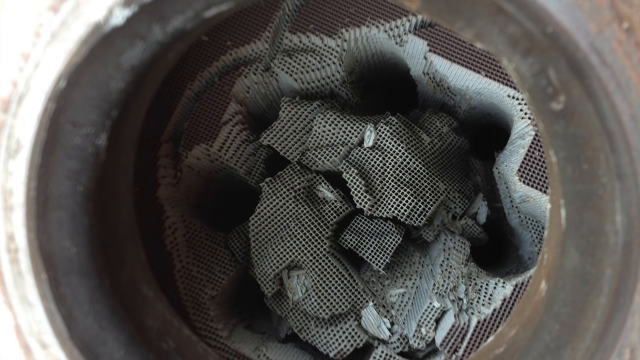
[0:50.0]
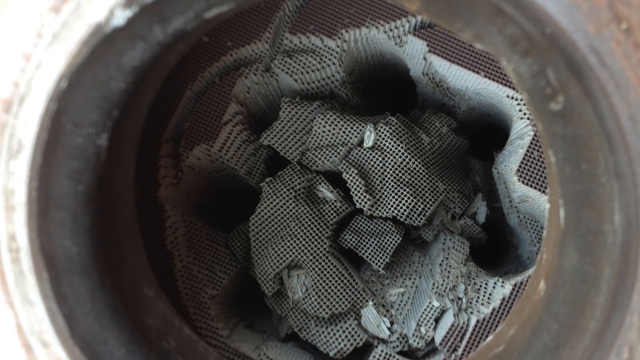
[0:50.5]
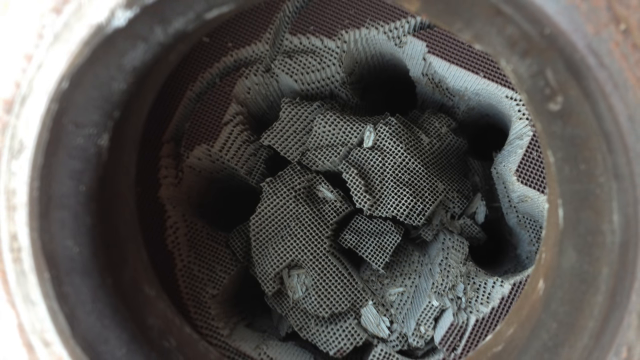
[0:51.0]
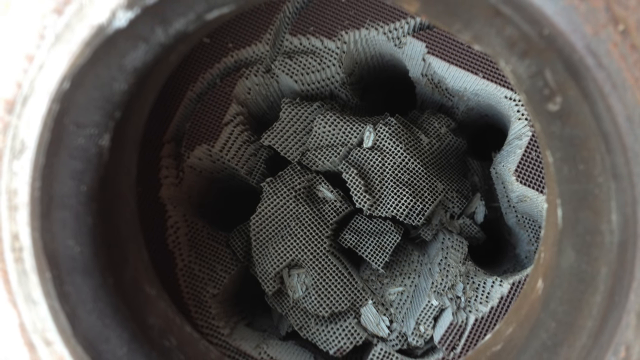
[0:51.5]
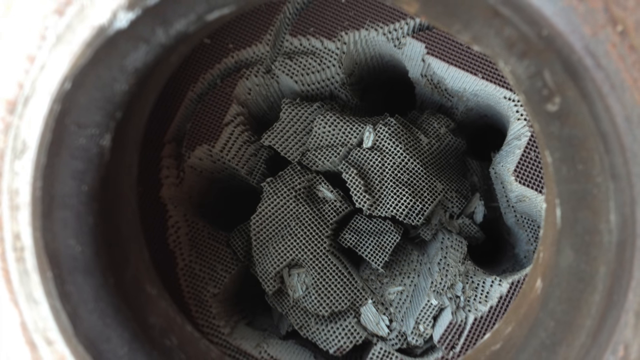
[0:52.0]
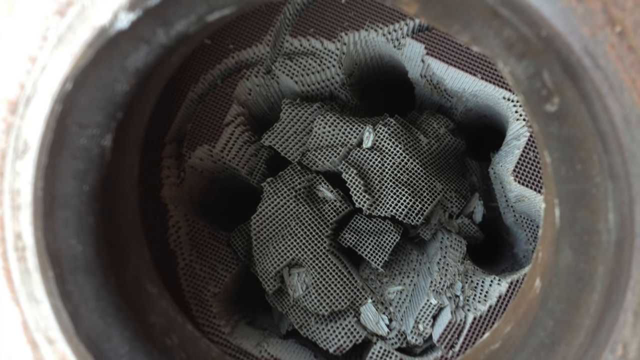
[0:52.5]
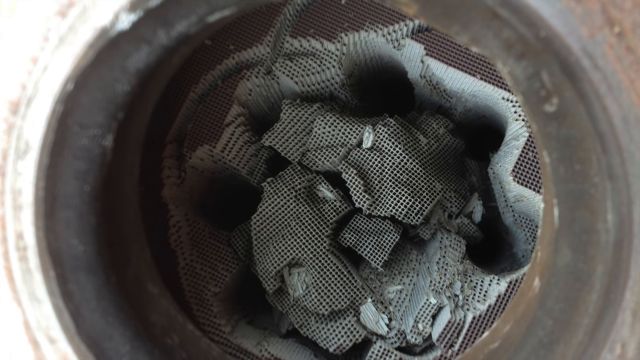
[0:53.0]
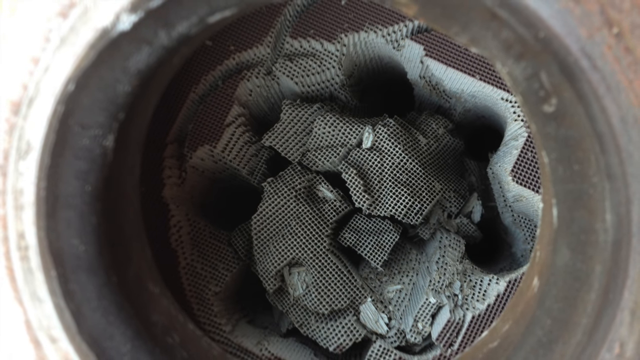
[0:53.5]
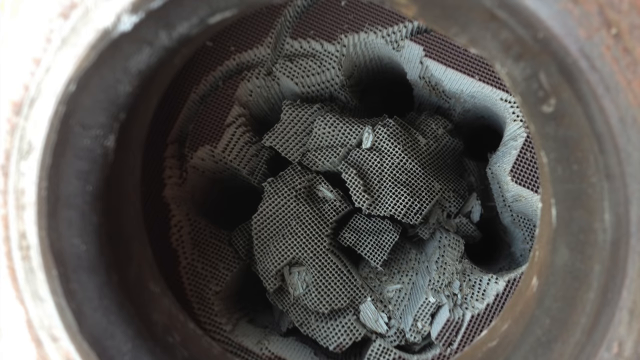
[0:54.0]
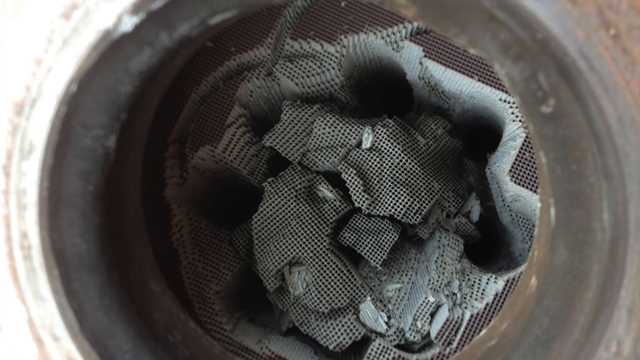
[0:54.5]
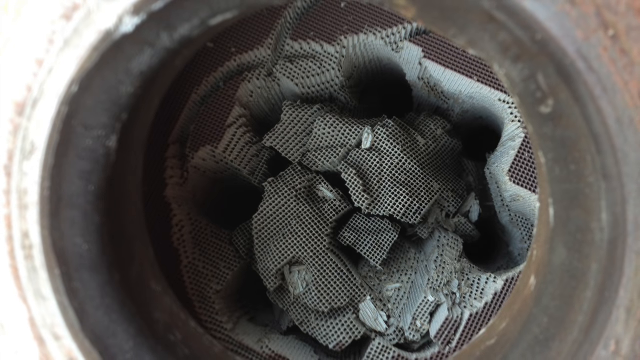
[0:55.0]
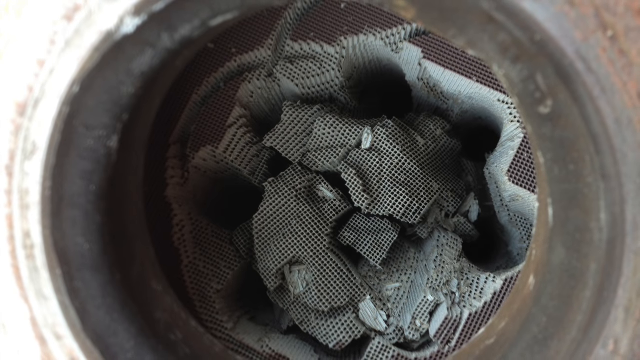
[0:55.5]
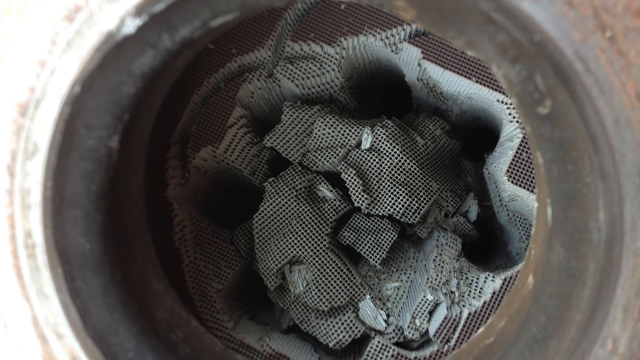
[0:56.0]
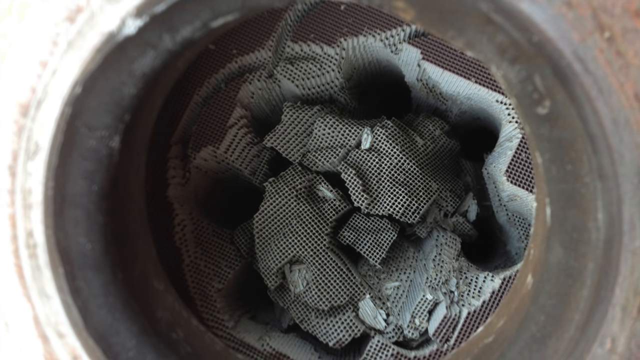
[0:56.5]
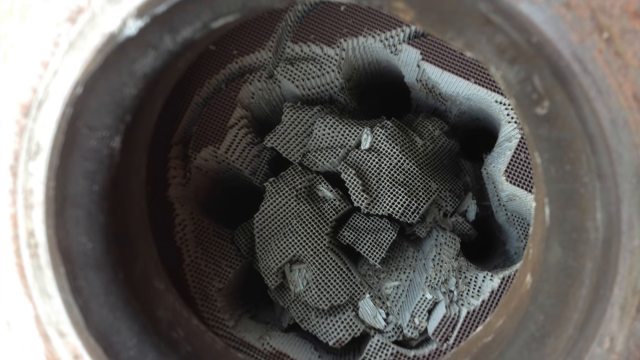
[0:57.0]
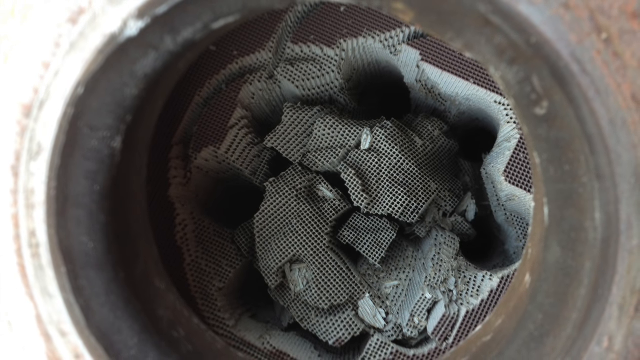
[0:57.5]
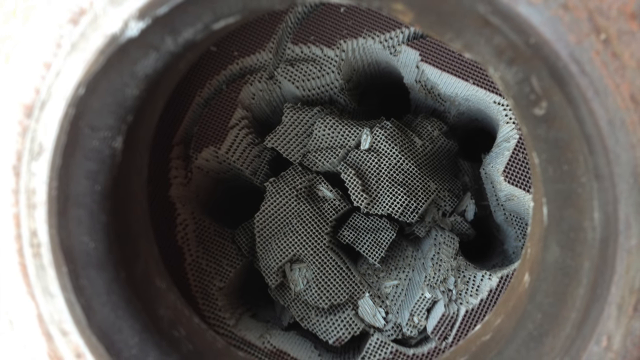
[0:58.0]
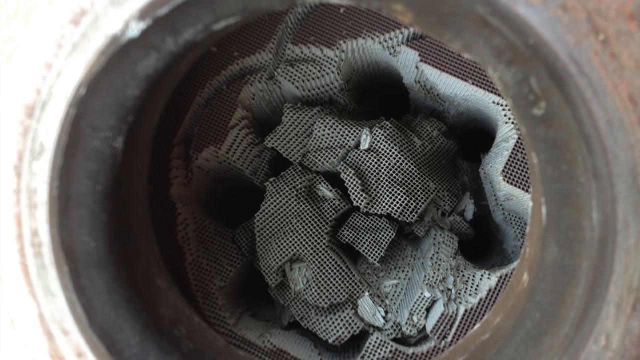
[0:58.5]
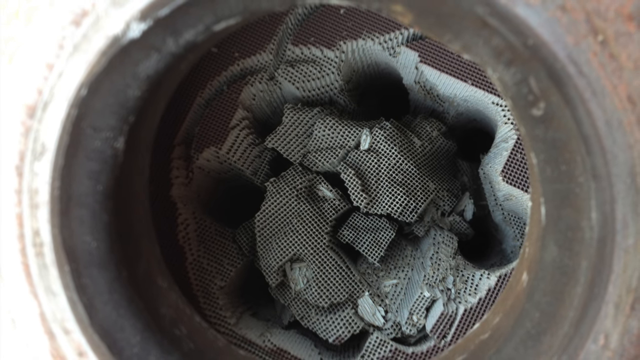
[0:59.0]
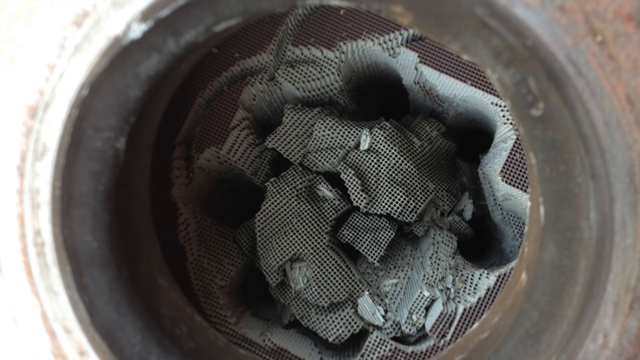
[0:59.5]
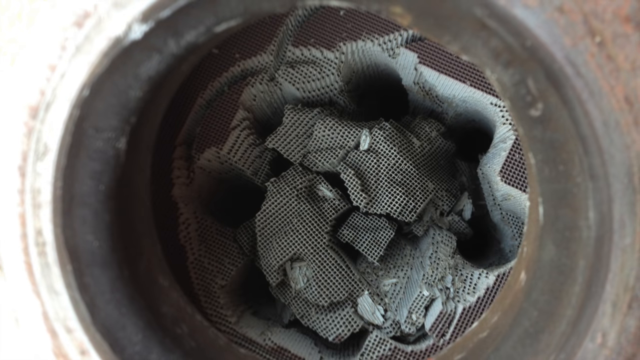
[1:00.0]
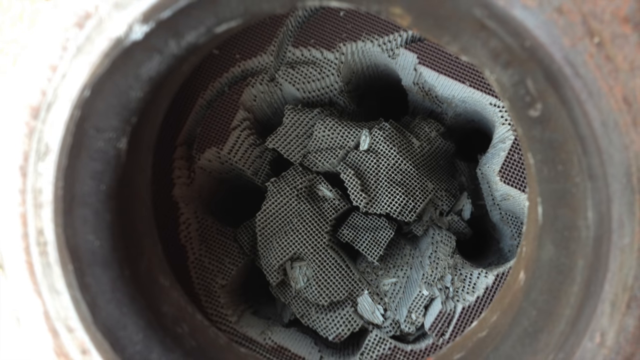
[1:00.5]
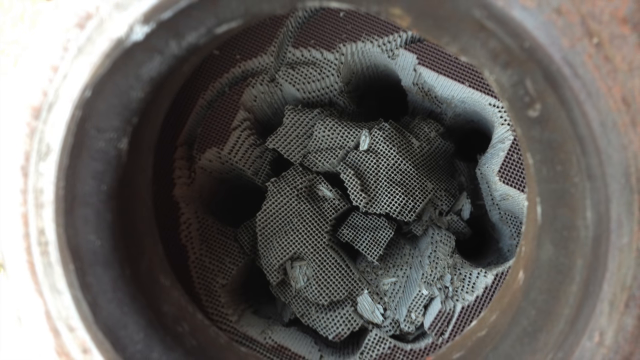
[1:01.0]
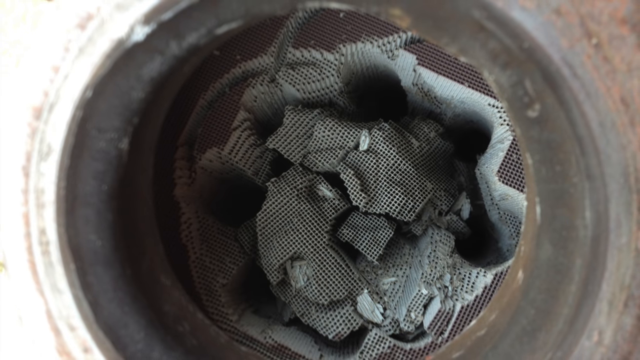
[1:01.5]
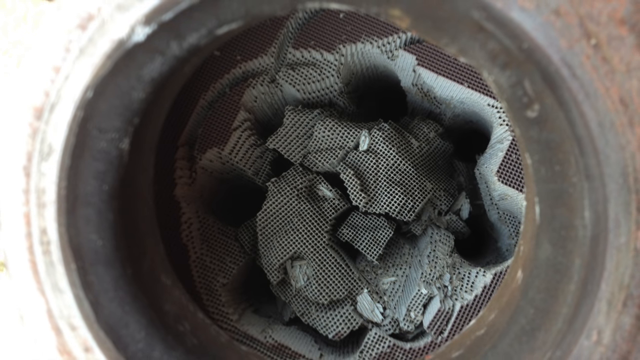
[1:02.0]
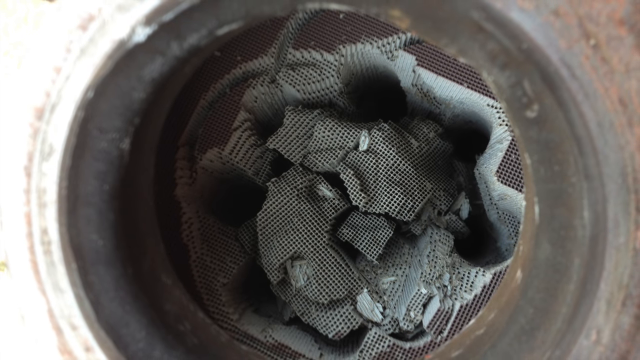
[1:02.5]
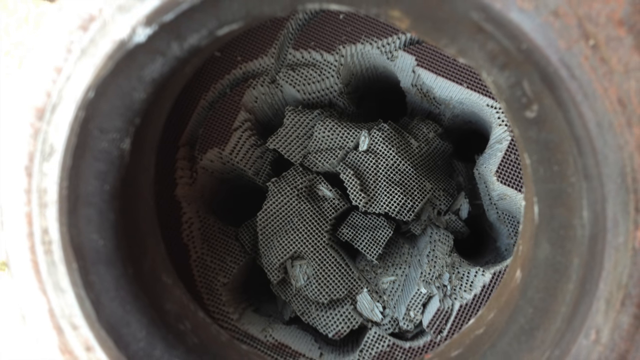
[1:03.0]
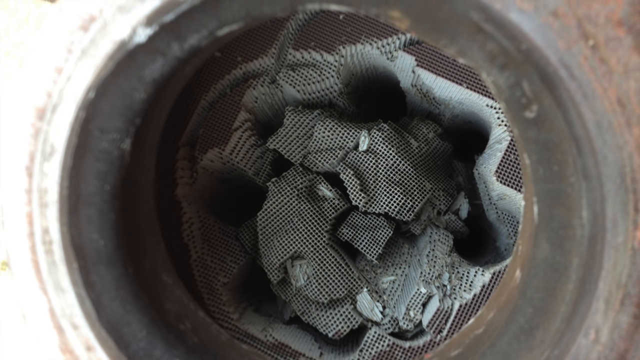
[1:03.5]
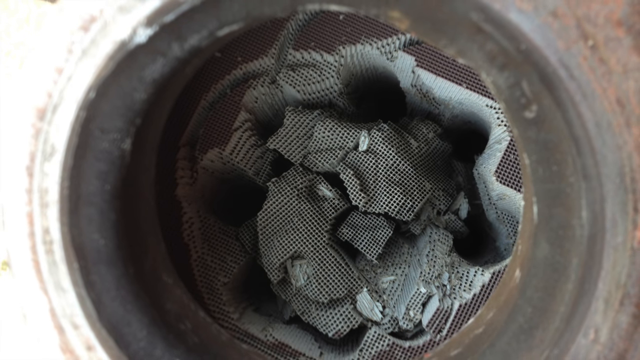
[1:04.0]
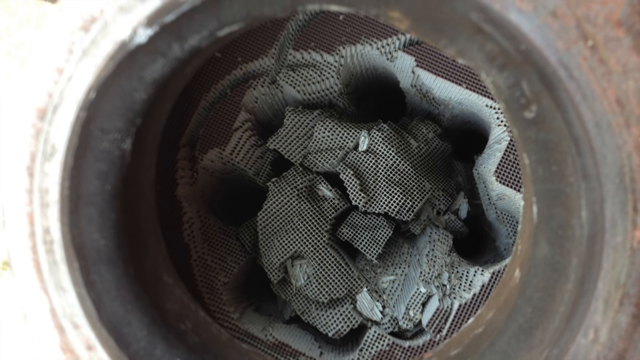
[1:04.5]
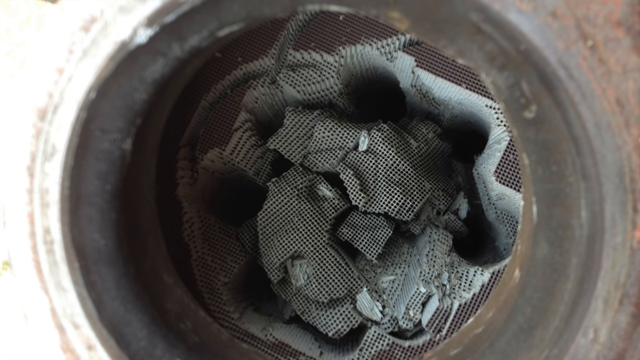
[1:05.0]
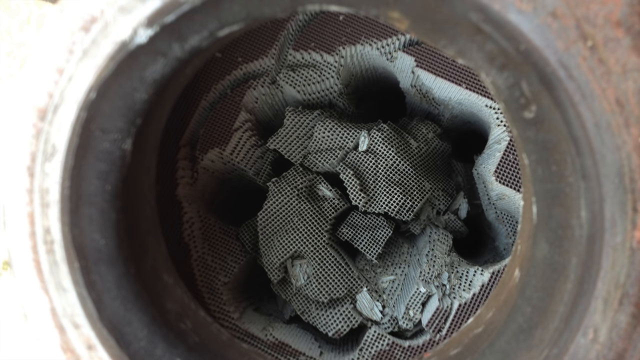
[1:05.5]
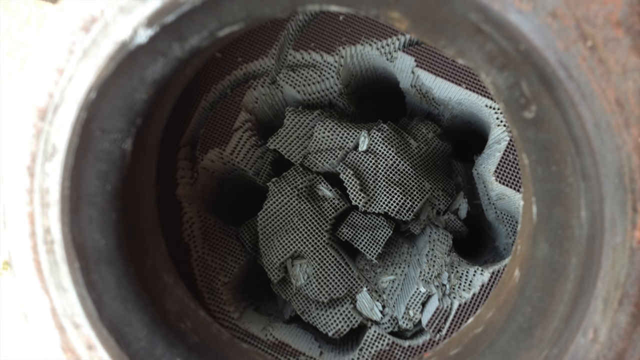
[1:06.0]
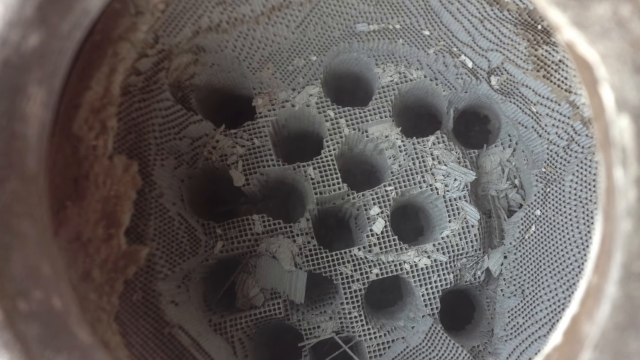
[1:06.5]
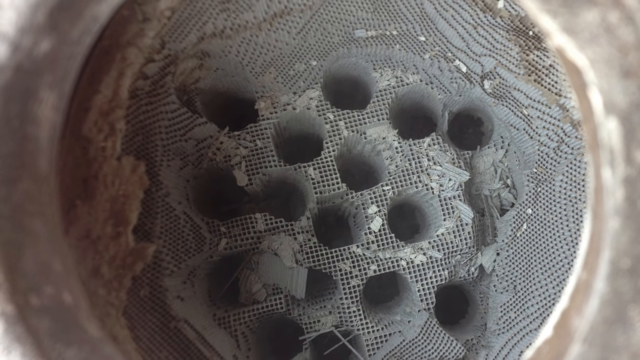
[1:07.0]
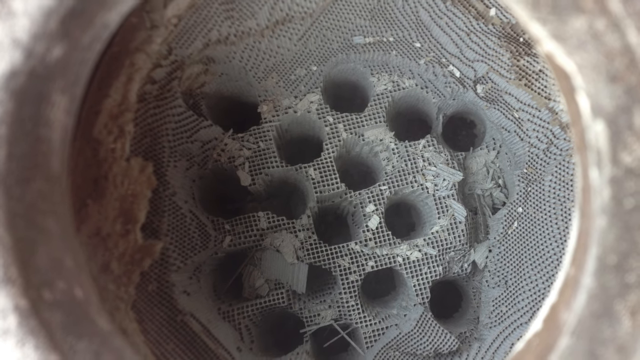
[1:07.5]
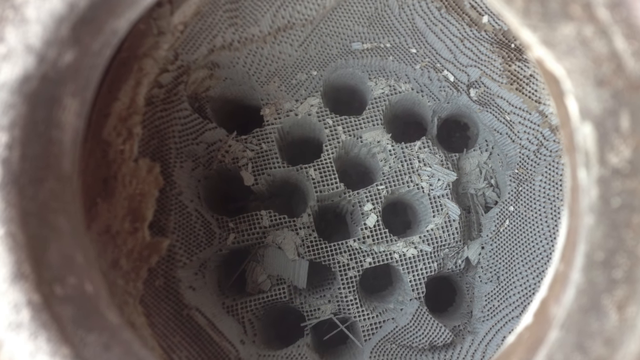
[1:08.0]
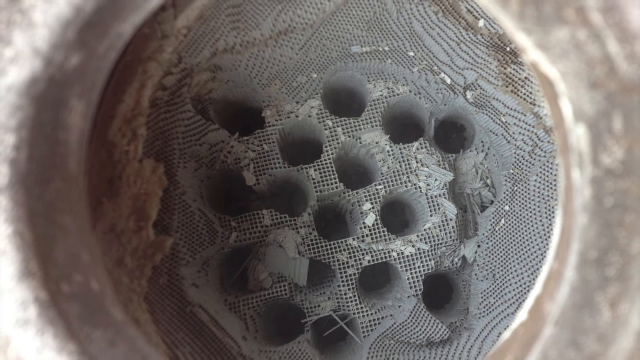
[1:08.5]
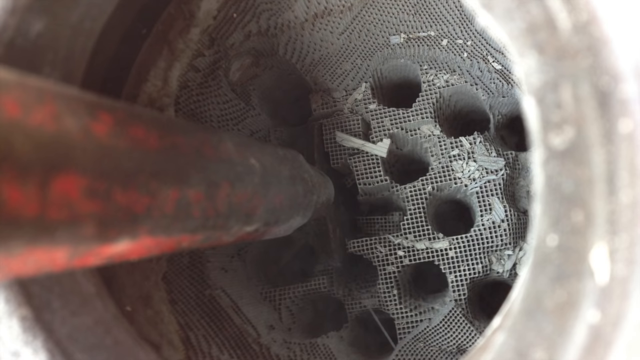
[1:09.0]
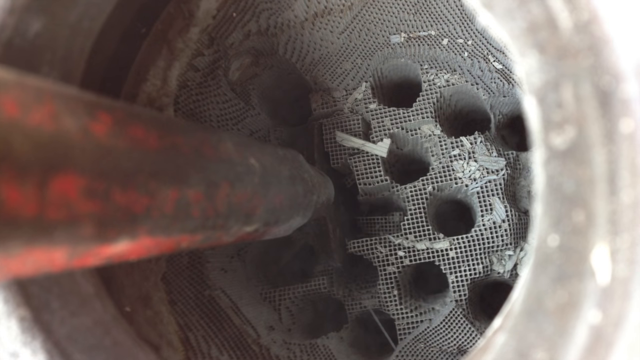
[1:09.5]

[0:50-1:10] The inside of a round cylinder holds what looks like broken-up screening or material. There is rope in it that appears to be tied in big knots at the end. Looking further in, there are round balls inside the circular object, along with debris that looks like little seeds thrown in. The outside of the rim is a little rusted and corroded. Inside, the material looks like screens, with breaks in it like squares that can be seen through. It is all one light bluish grey, with parts flapped over near the edges. The pieces look ripped up, with very jagged edges, and are set very deep into the cylinder.